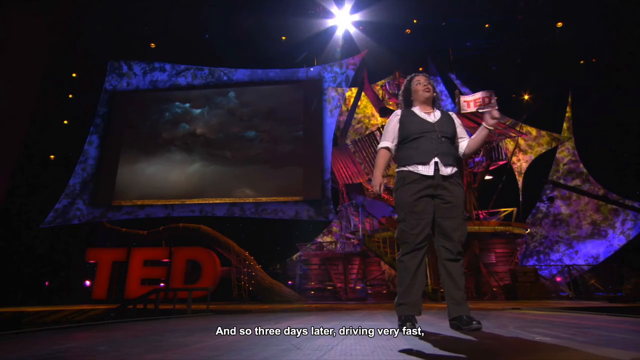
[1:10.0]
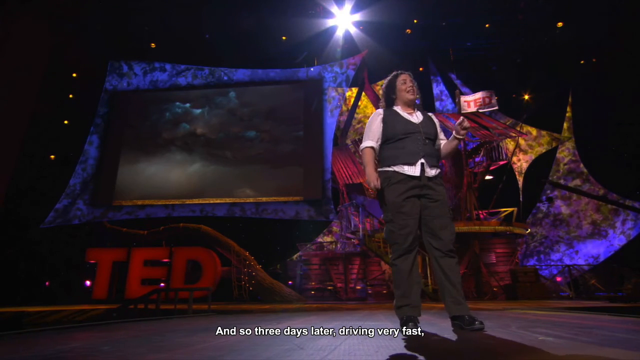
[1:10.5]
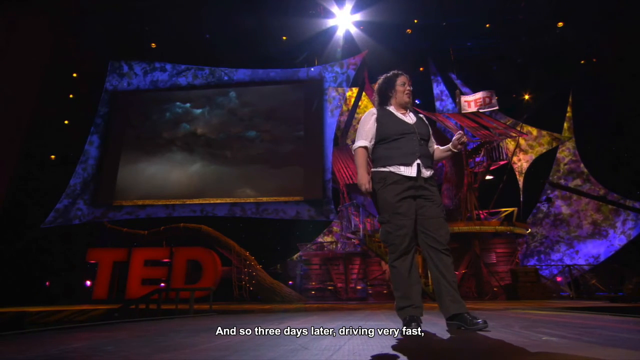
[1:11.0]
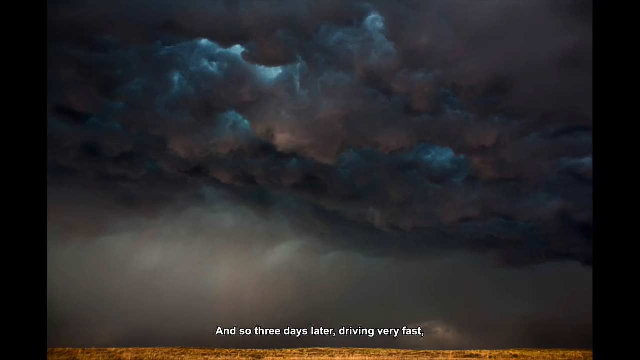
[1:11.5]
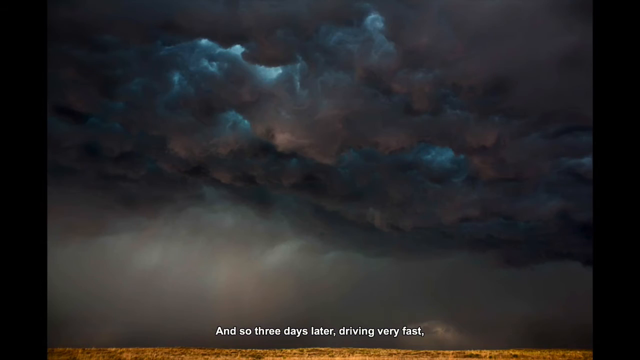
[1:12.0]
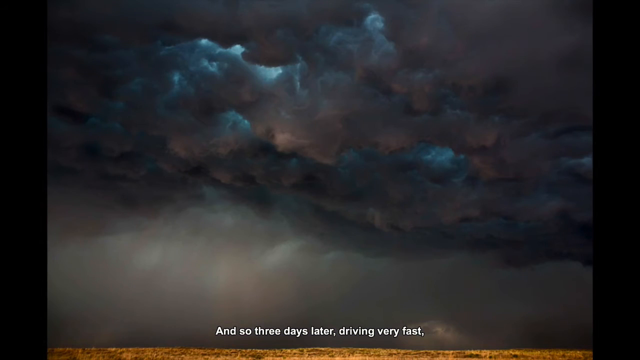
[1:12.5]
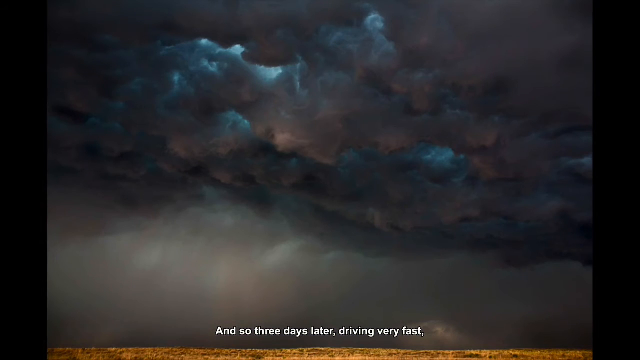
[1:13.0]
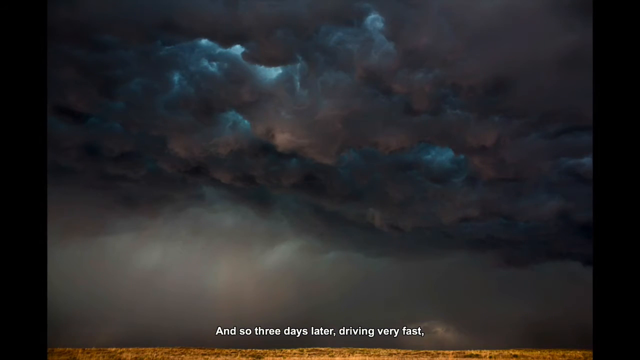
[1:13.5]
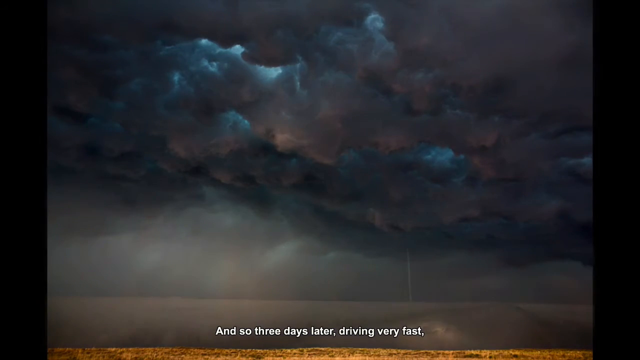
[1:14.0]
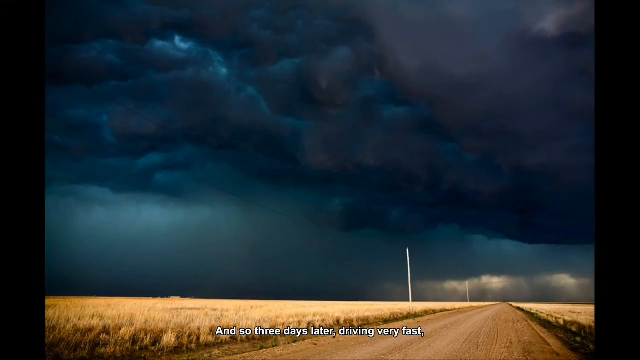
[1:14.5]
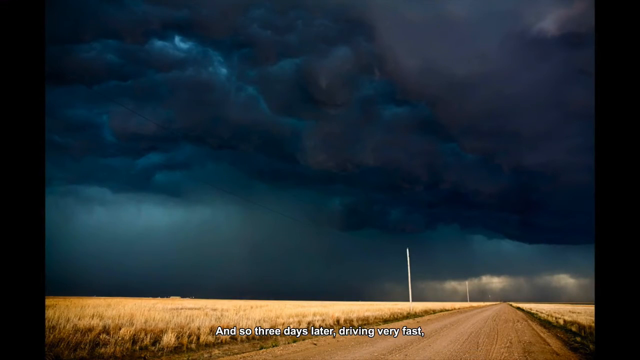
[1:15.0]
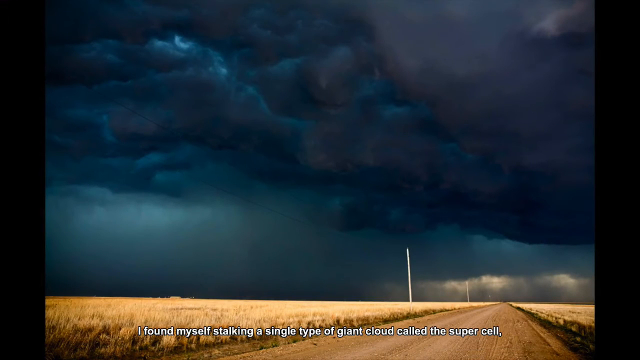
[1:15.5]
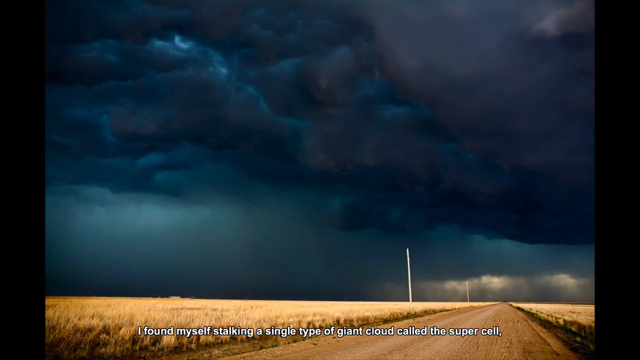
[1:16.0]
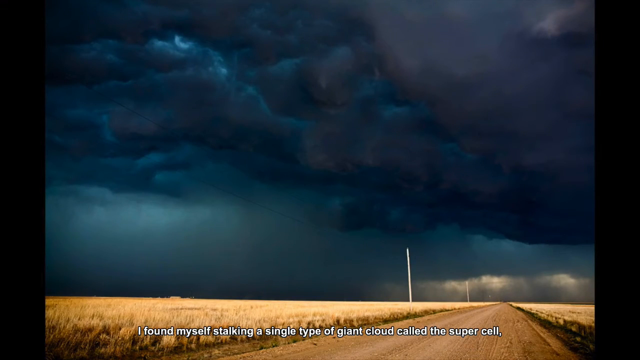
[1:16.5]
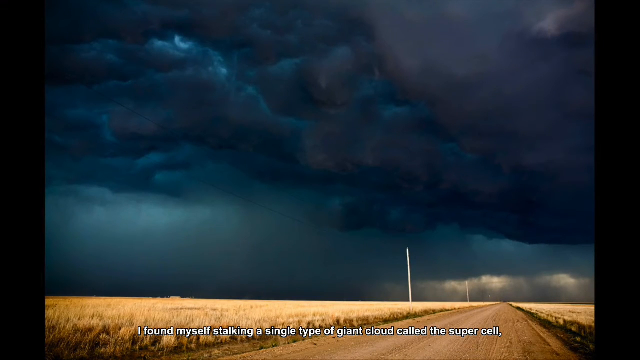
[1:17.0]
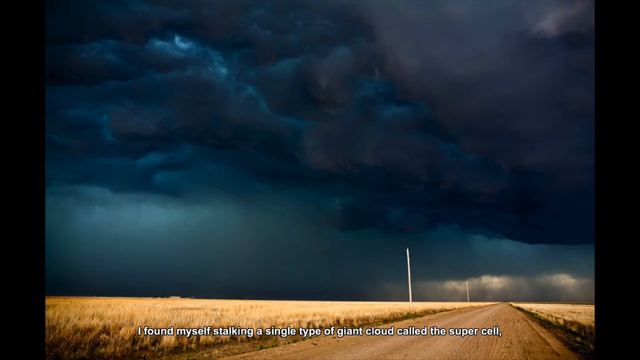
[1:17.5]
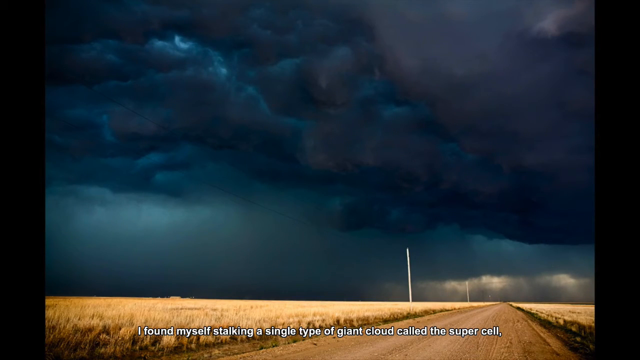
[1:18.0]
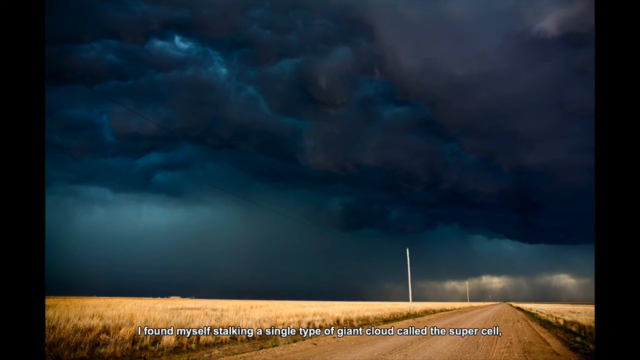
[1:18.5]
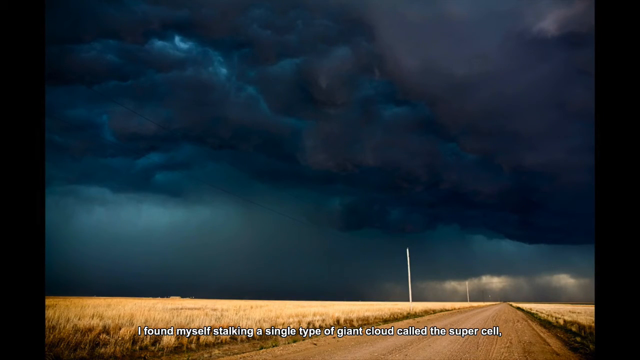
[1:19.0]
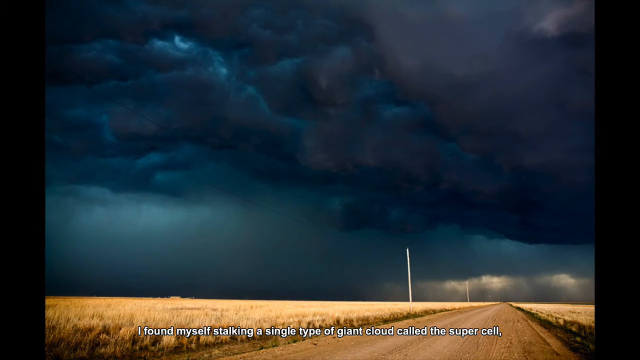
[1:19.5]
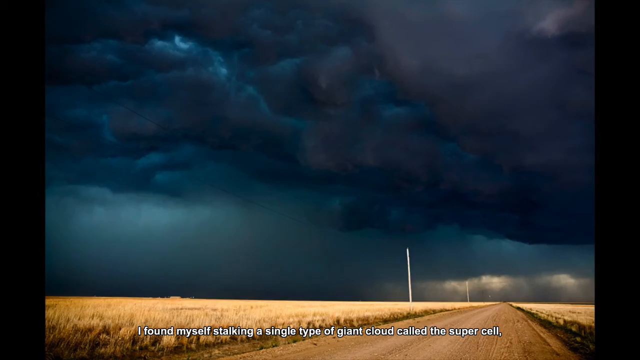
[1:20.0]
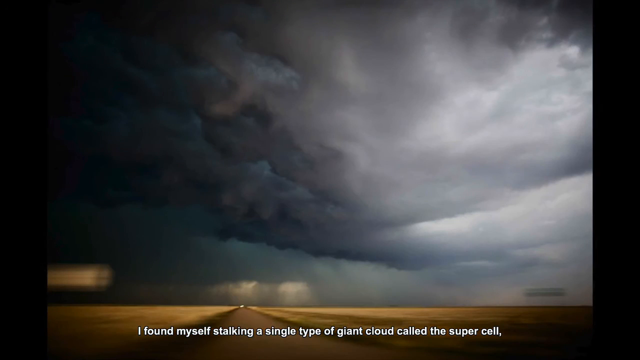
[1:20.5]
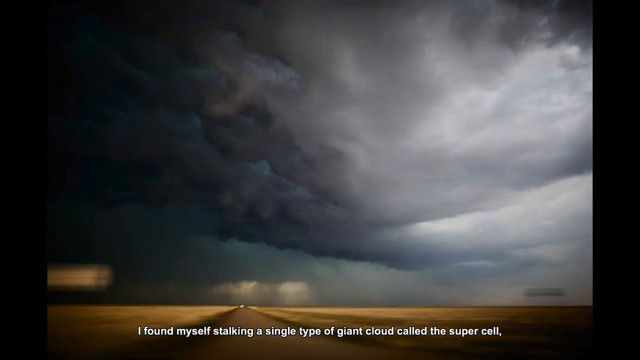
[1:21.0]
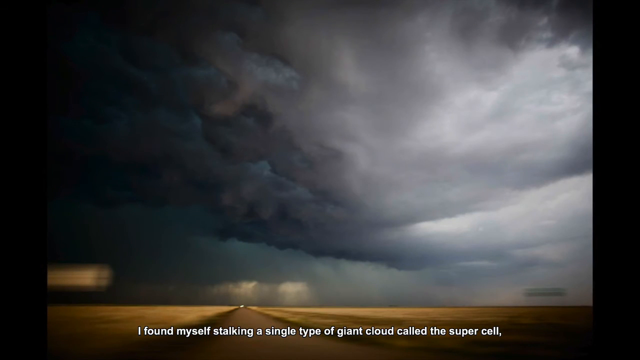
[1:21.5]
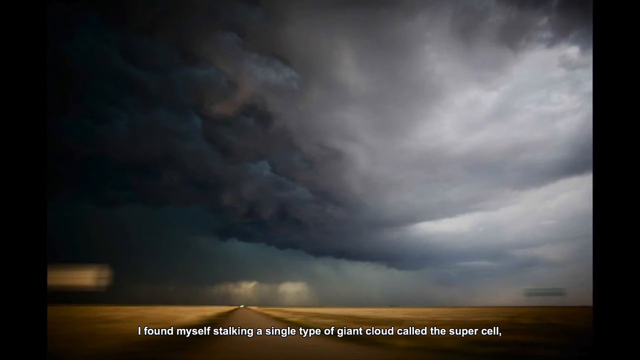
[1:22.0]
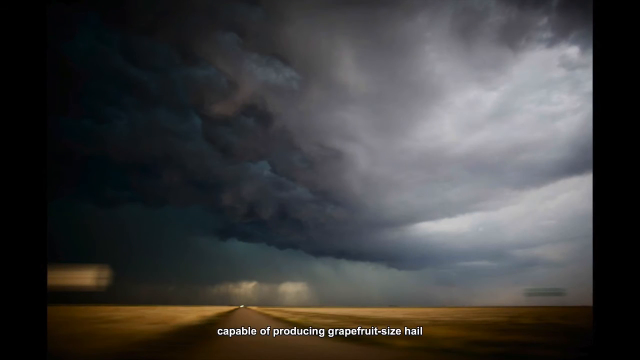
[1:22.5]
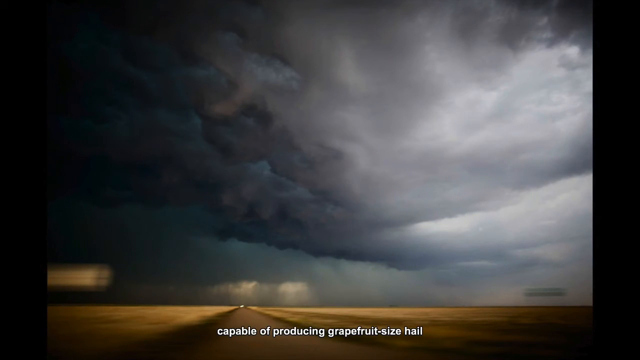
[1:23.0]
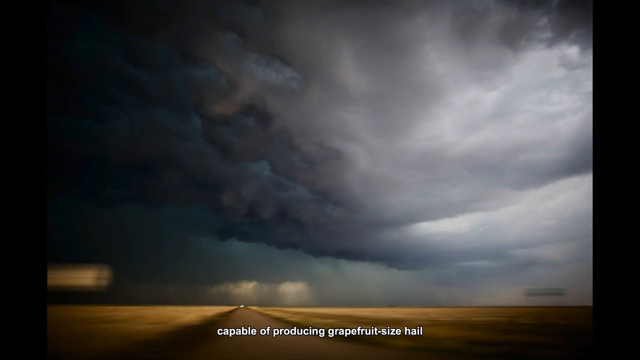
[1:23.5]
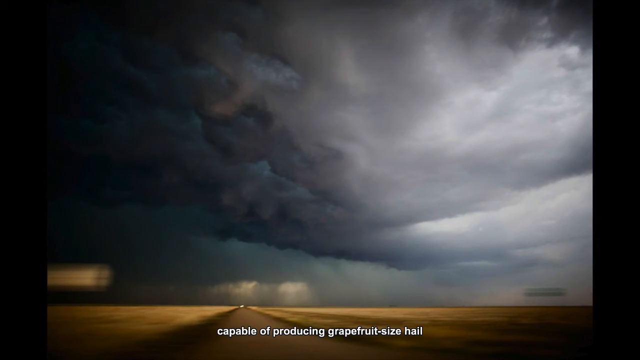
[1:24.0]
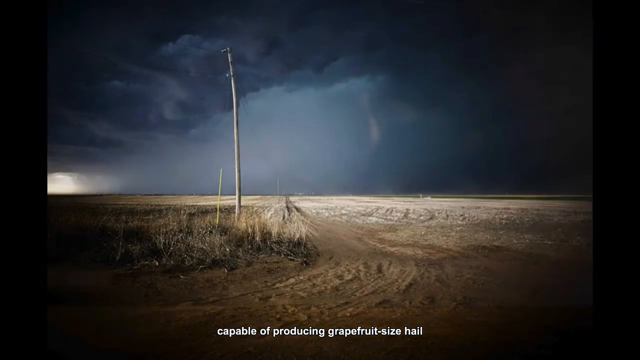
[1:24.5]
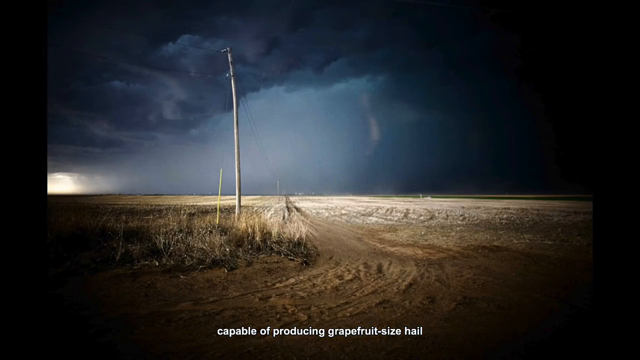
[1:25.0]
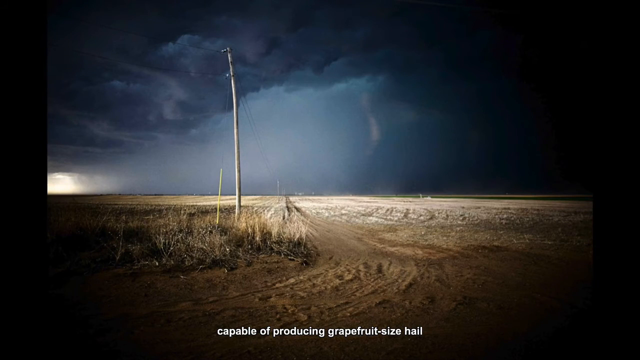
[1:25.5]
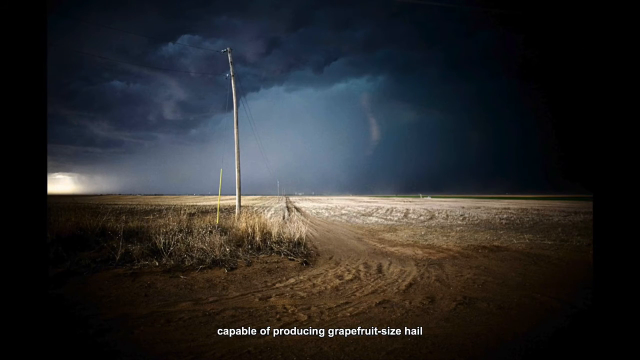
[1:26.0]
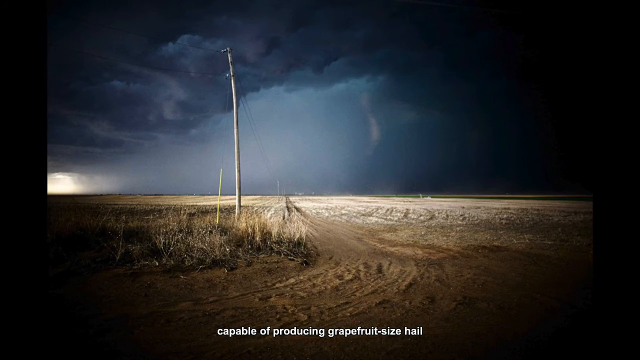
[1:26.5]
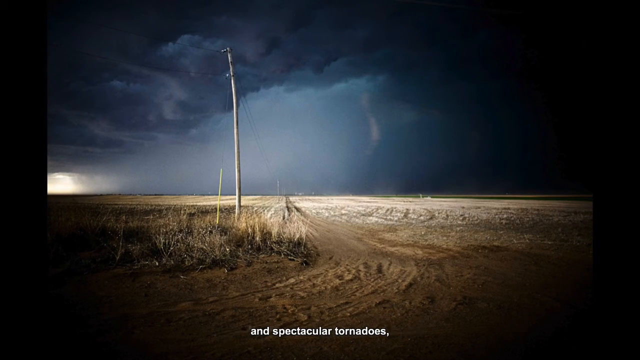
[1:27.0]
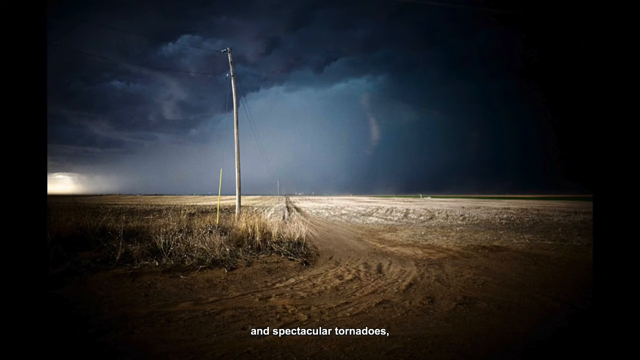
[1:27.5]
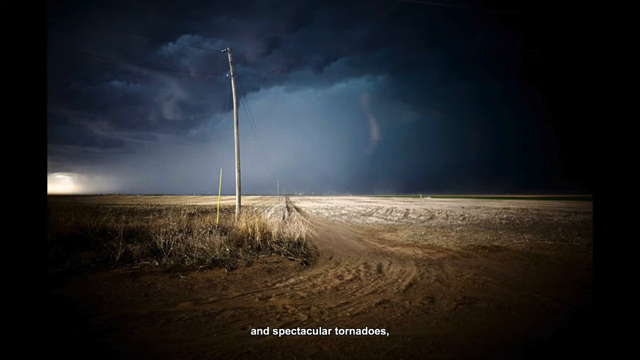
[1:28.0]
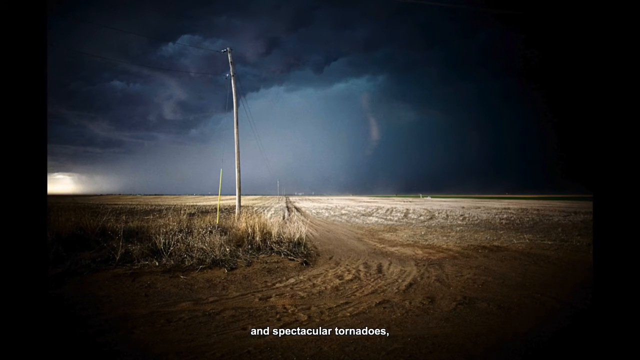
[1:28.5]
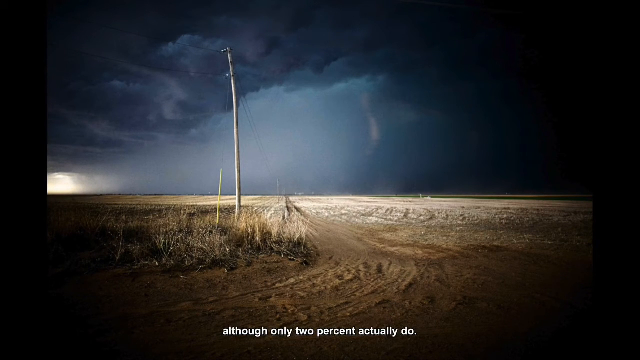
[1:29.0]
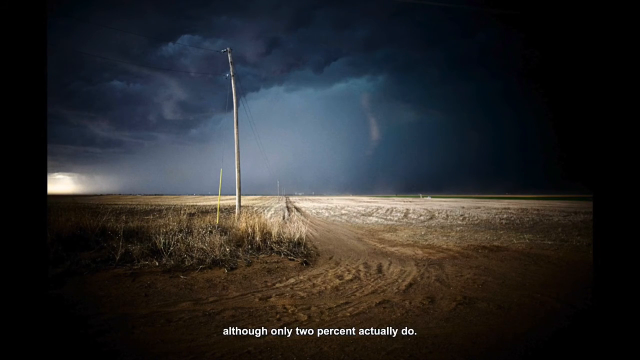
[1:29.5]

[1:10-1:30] The speaker stands on stage addressing the audience, in a shot angled from below looking up at her, as if the camera operator is off the stage at a different elevation. It cuts to an image of dark clouds in the sky with light blue light breaking through, and text at the bottom reads "and so three days later driving very fast." The next image has very dark clouds with more blue light breaking through, a dirt road, yellow dead grass, and two white pillars protruding from the ground along the dirt road. Text at the bottom reads "I found myself stalking a single type of giant cloud called the supercell." The image shifts to more storm clouds with white light breaking through, more dead grass and a dirt road, with text at the bottom reading "capable of producing grapefruit-sized hail." A new image shows a power line amid dead grass in a field, with storm clouds above.